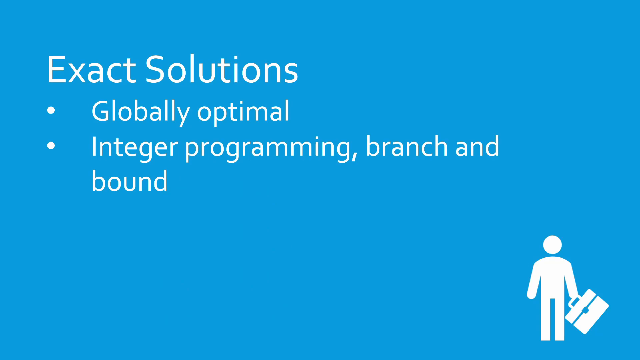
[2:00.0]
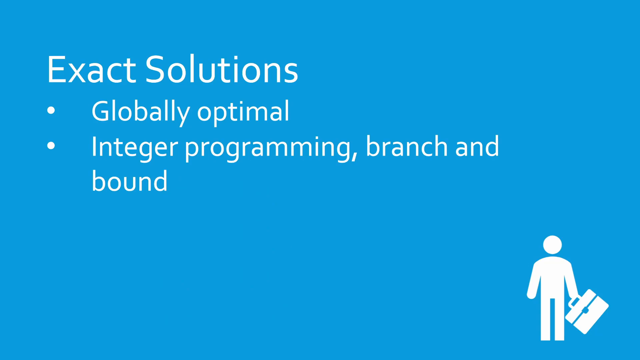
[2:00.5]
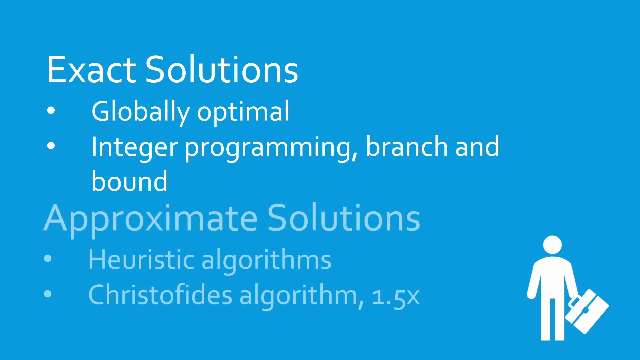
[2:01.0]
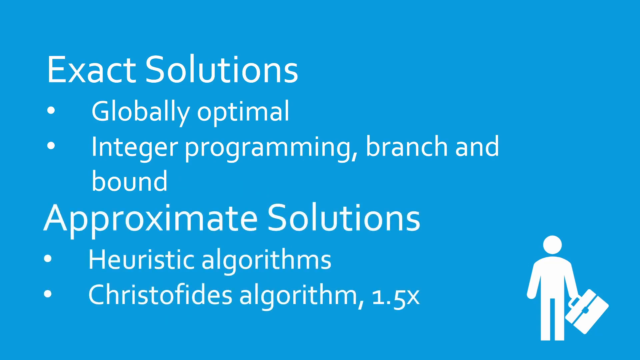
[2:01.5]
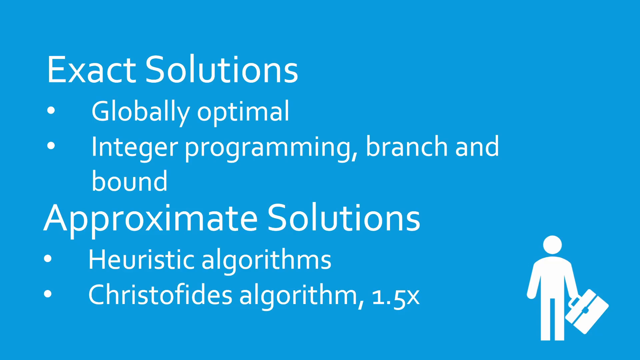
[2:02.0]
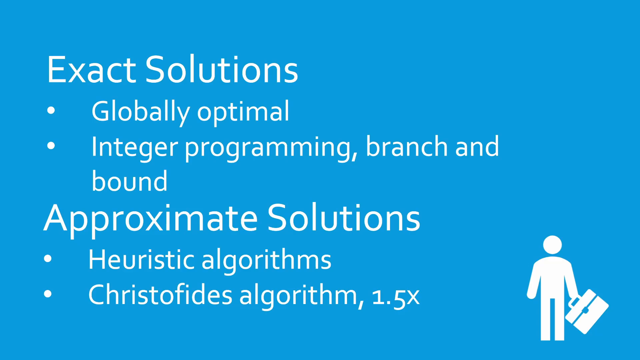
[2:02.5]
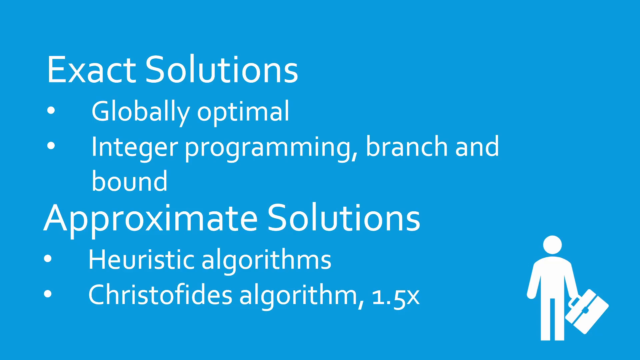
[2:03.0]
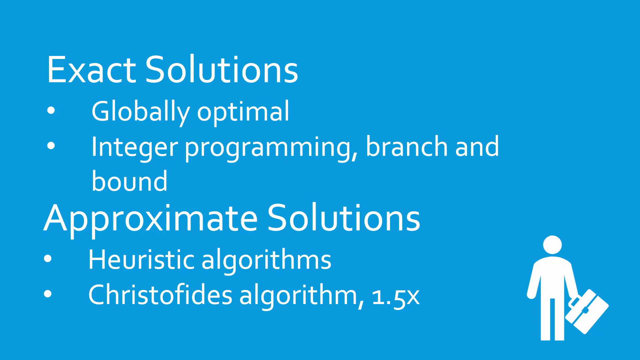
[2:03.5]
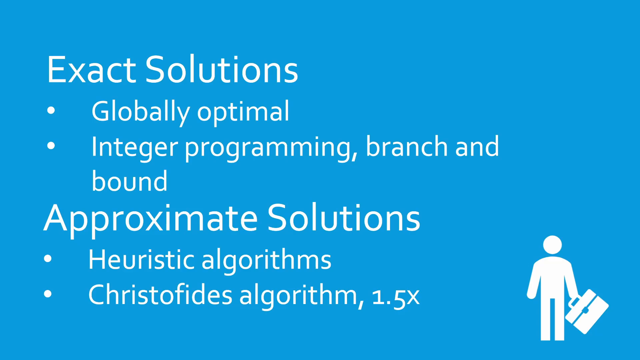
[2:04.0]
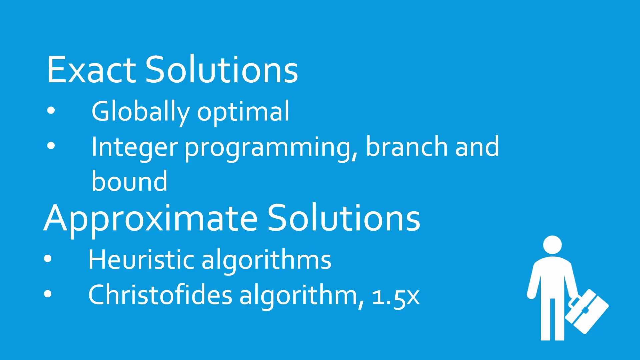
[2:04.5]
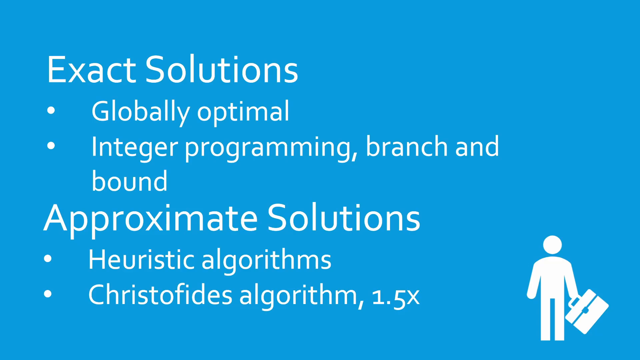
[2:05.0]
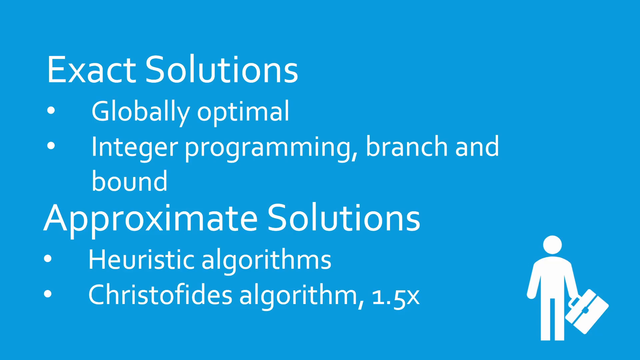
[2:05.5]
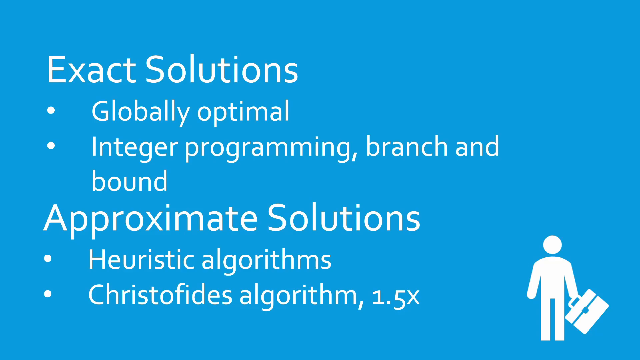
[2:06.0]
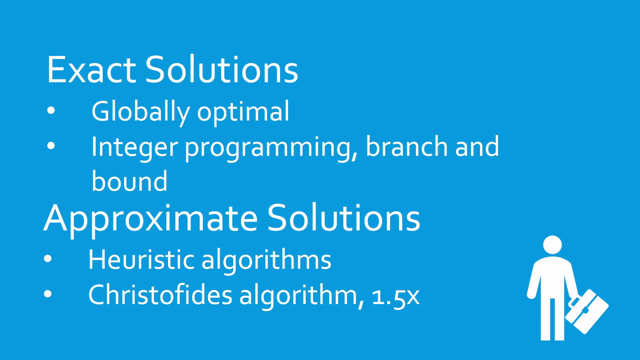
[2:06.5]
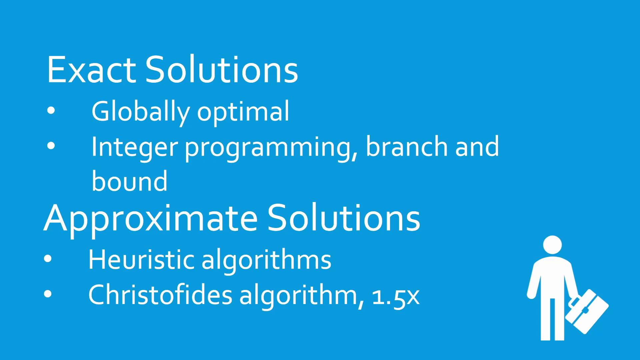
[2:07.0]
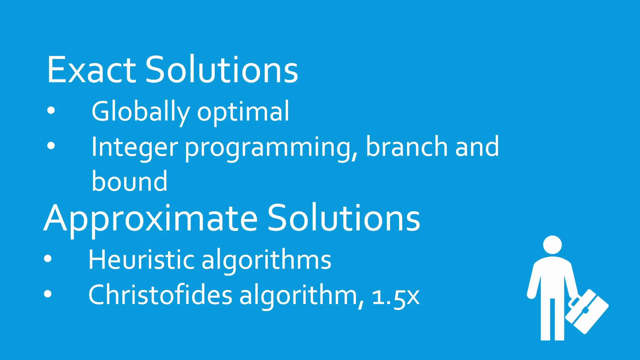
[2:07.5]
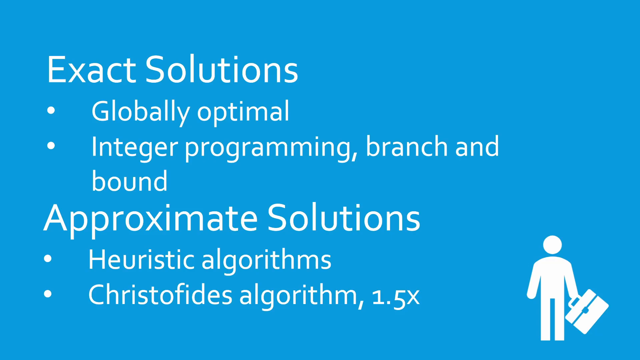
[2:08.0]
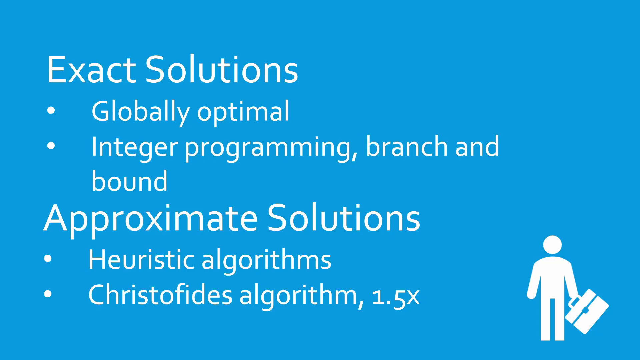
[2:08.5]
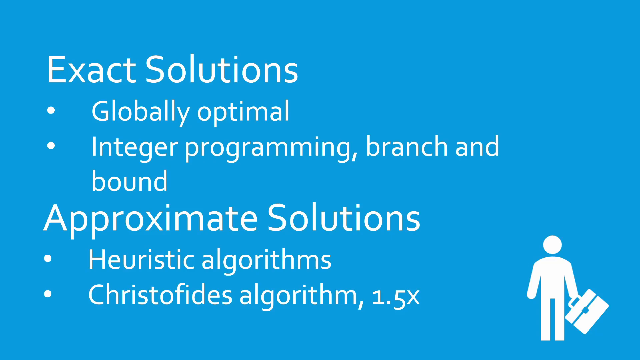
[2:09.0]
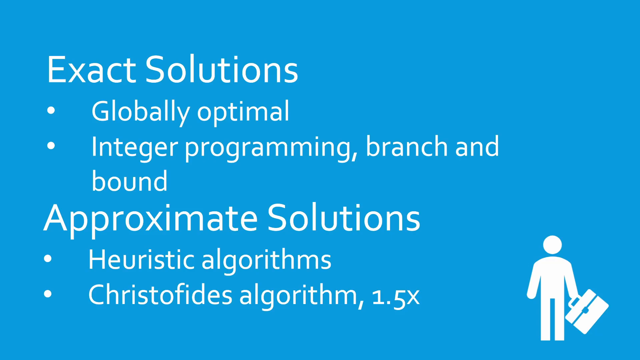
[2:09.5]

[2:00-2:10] A blue slide with white writing reads "exact solutions," followed by bullet points "globally optimal," "integer programming," and "branch and bound." In the right-hand corner is the symbol of a man, like the kind seen on a bathroom sign, with a briefcase. The slide then also reads "approximate solutions," "heuristic algorithms," "Christofides algorithm," "1.5X." The video then stays on this blue slide with nothing else happening.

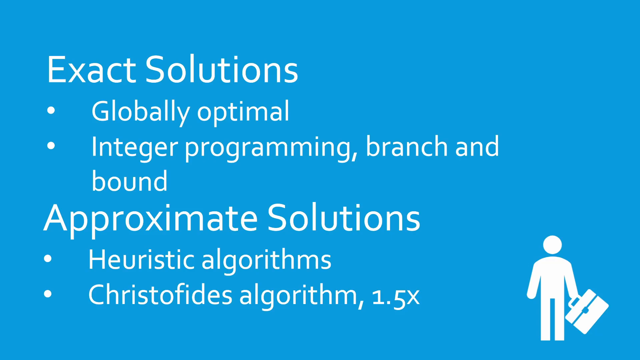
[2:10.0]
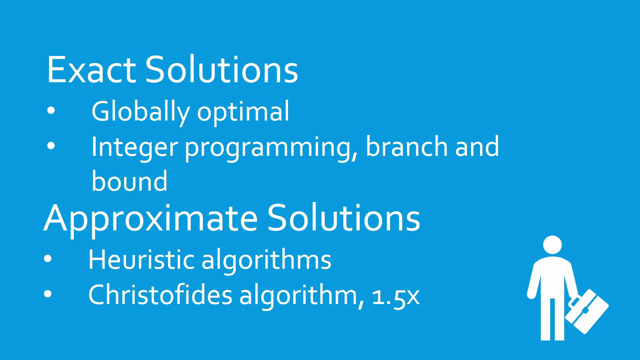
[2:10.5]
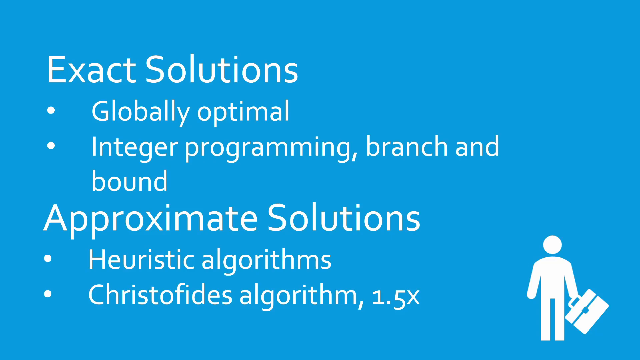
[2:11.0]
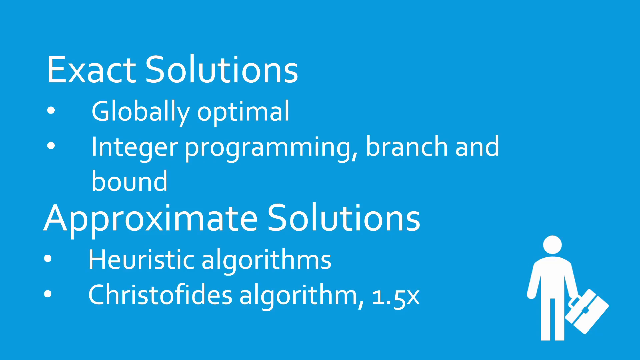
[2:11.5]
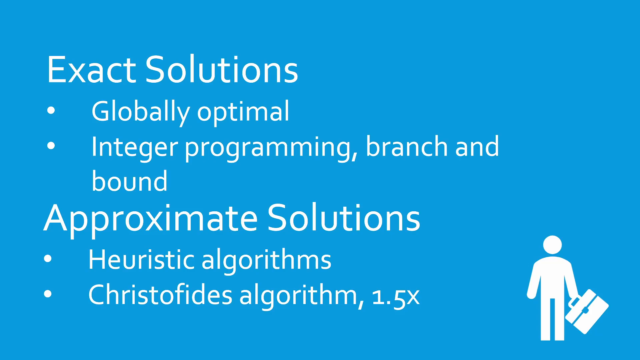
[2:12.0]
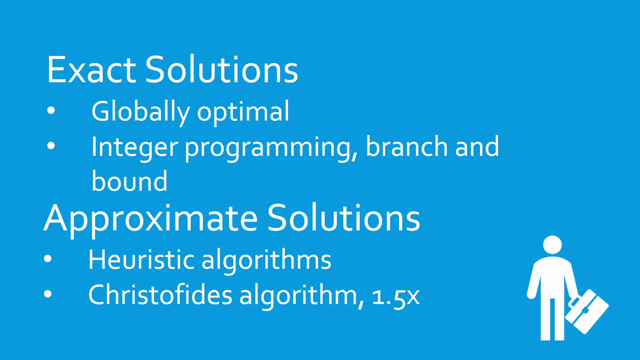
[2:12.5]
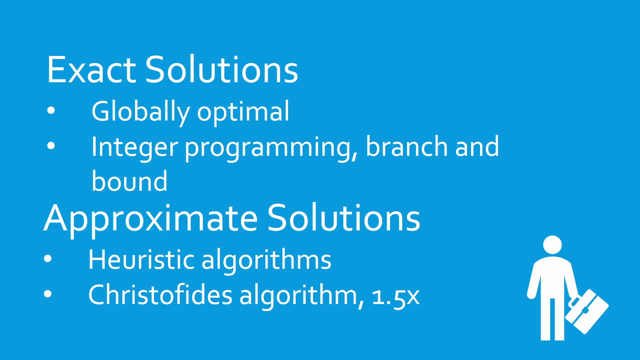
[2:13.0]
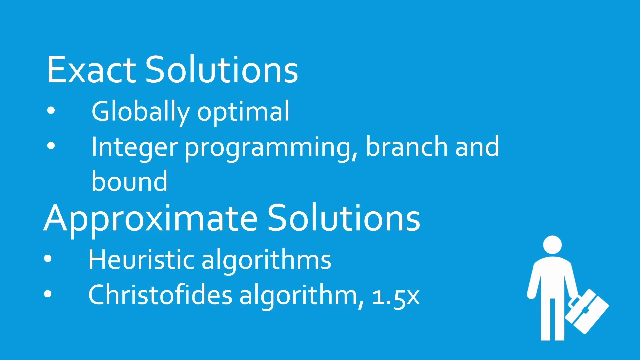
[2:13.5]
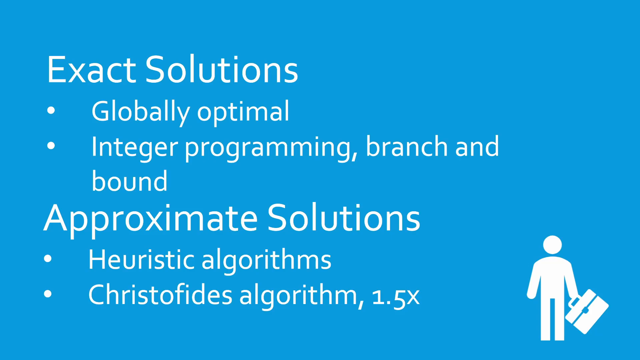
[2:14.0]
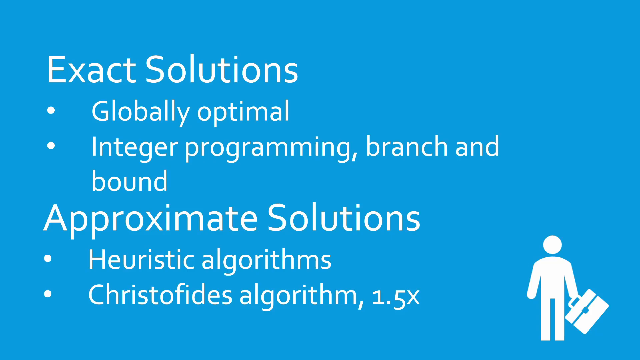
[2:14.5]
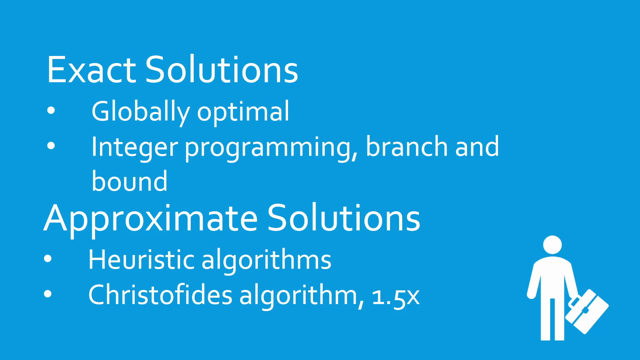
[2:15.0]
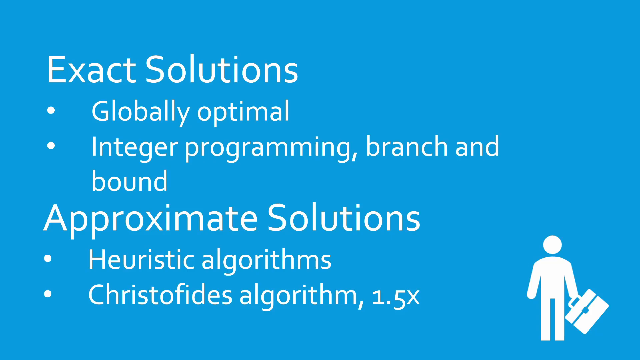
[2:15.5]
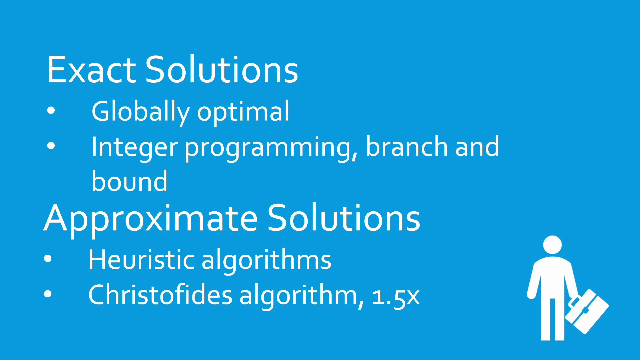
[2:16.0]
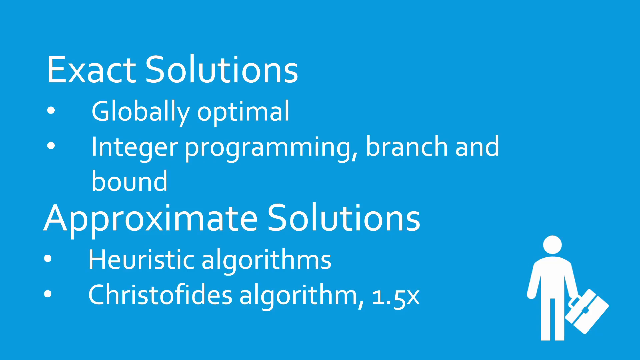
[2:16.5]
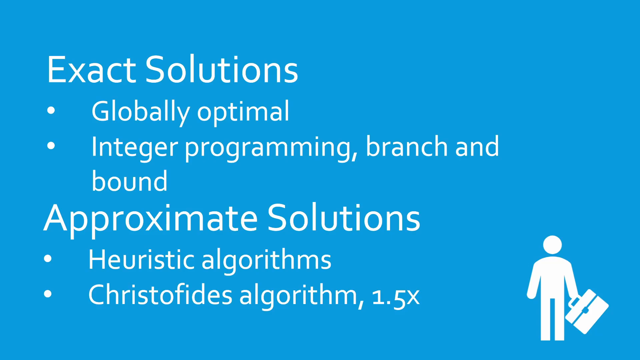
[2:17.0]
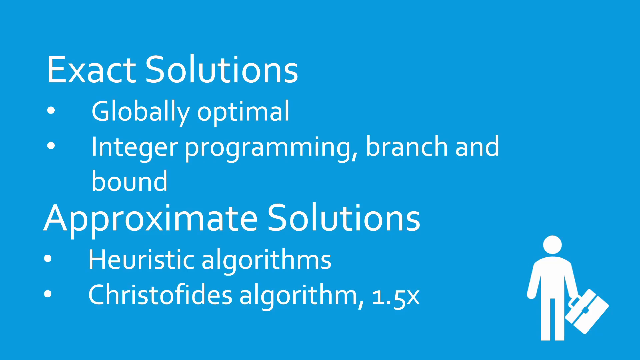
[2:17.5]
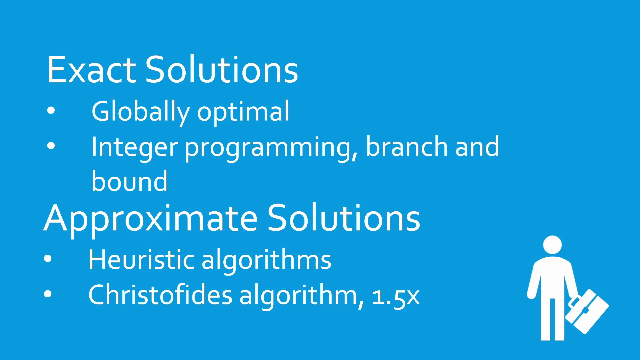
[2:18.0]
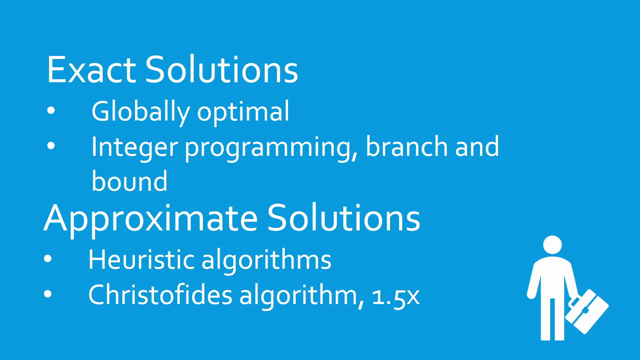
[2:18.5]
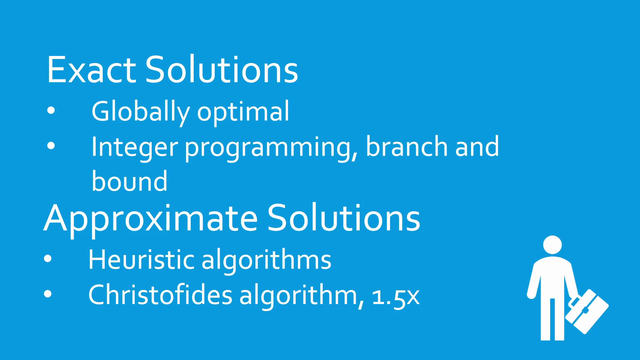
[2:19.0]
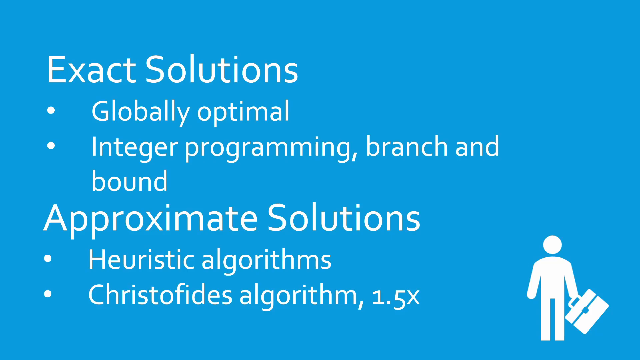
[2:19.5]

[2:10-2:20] A slide reads "exact solutions, globally optimal, integer programming, branch and bound, approximate solutions, heuristic algorithms, Christofidis algorithm 1.5x." A little icon of a businessman or traveling salesman with his briefcase is at the very bottom right. Nothing changes; it remains a blue background with white writing.